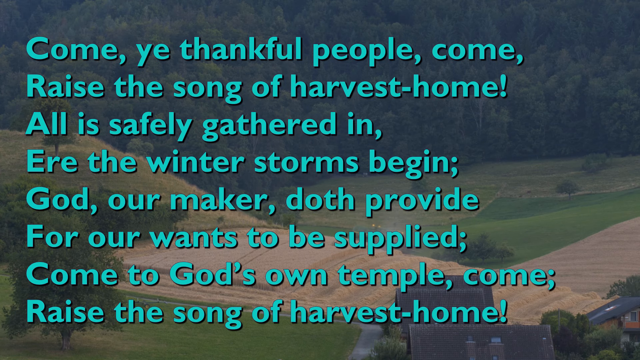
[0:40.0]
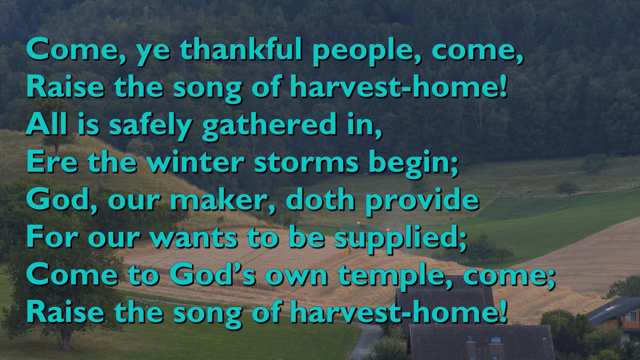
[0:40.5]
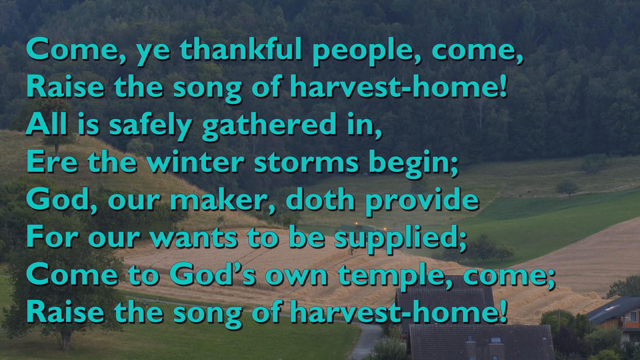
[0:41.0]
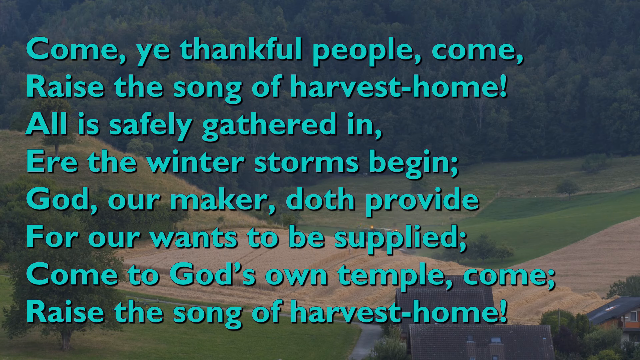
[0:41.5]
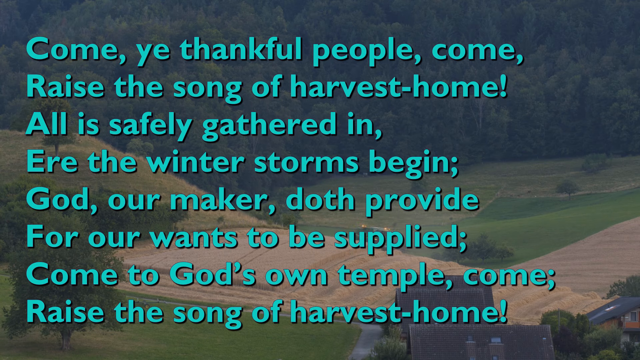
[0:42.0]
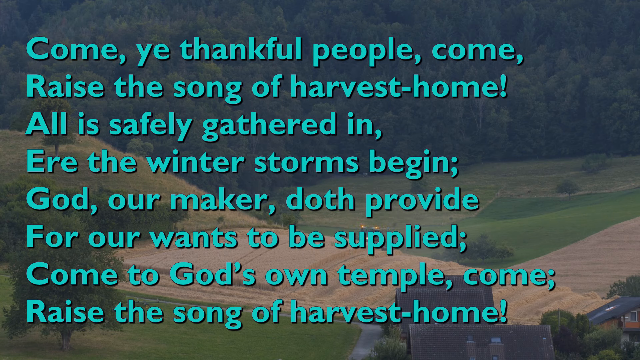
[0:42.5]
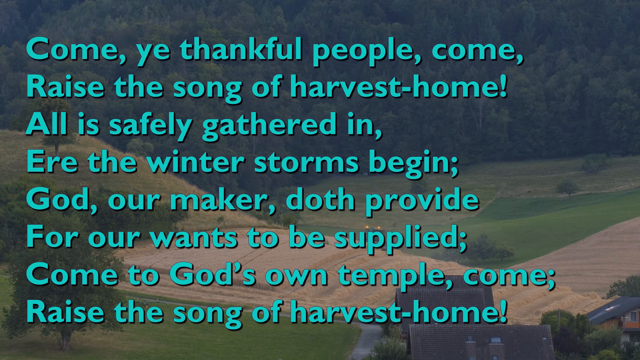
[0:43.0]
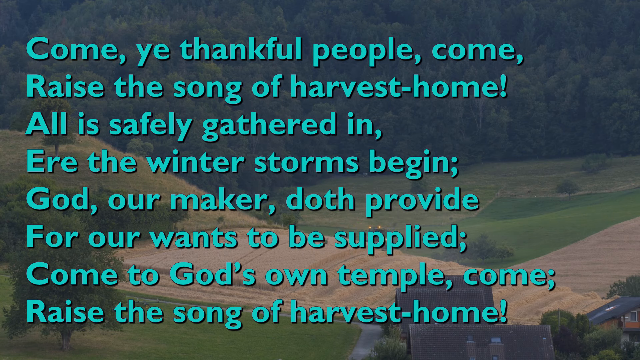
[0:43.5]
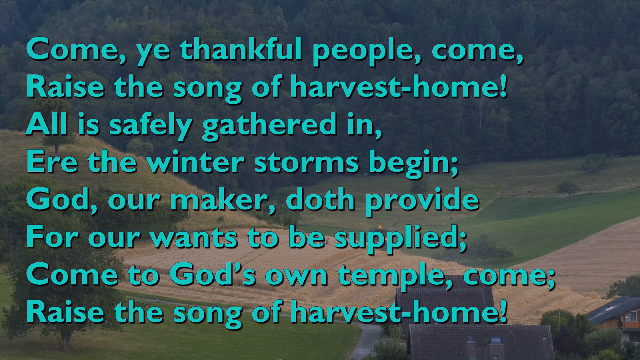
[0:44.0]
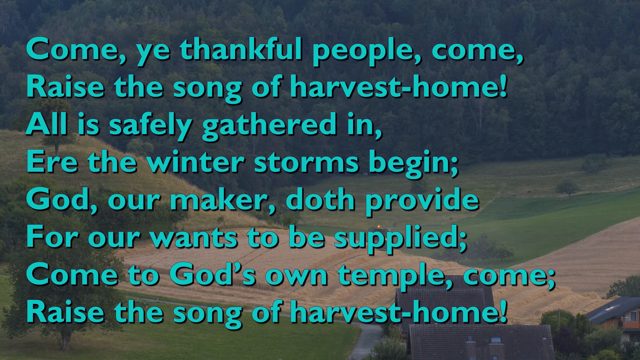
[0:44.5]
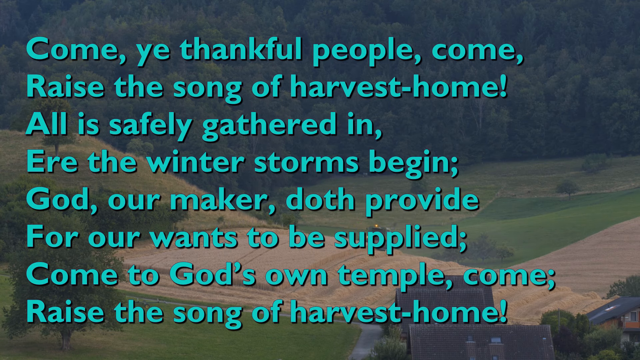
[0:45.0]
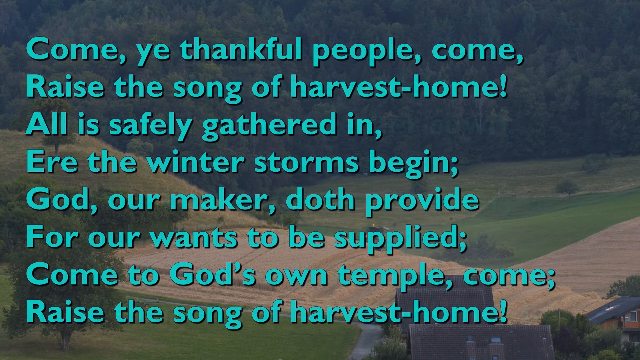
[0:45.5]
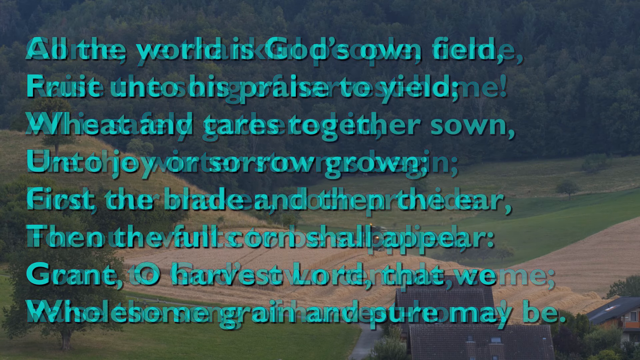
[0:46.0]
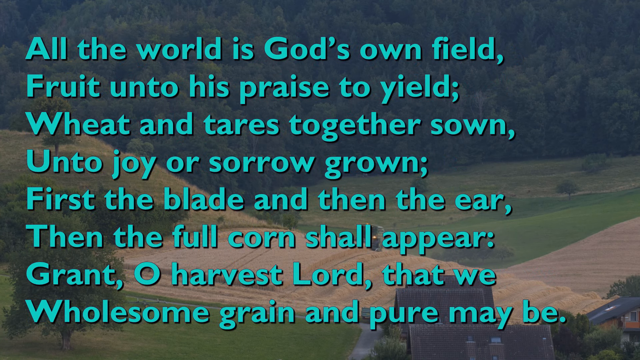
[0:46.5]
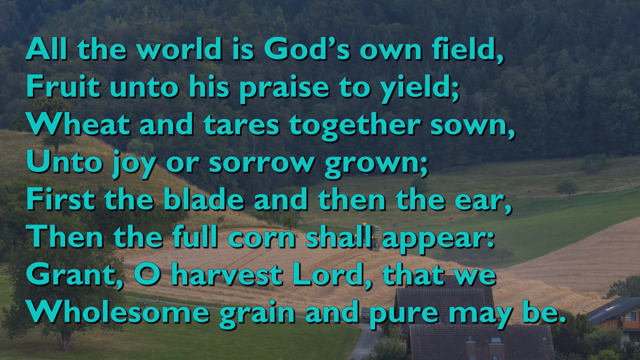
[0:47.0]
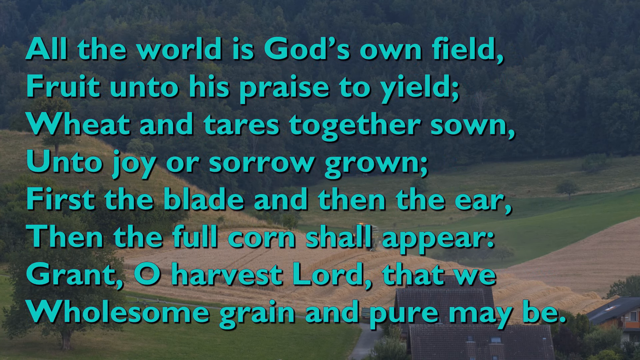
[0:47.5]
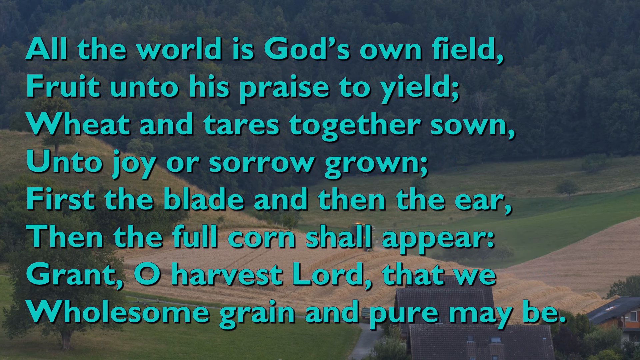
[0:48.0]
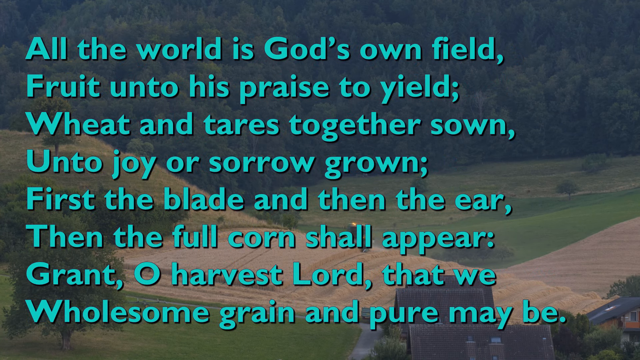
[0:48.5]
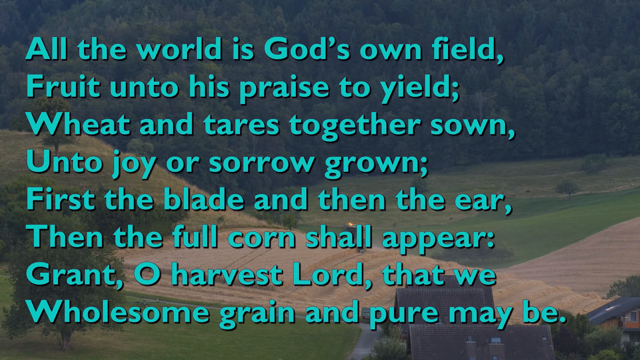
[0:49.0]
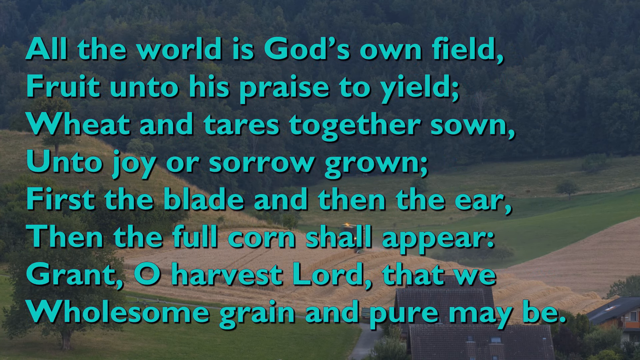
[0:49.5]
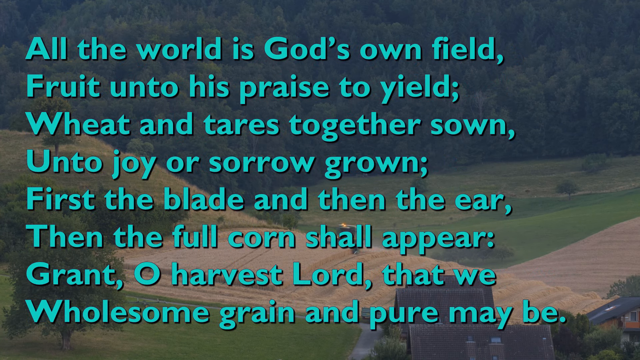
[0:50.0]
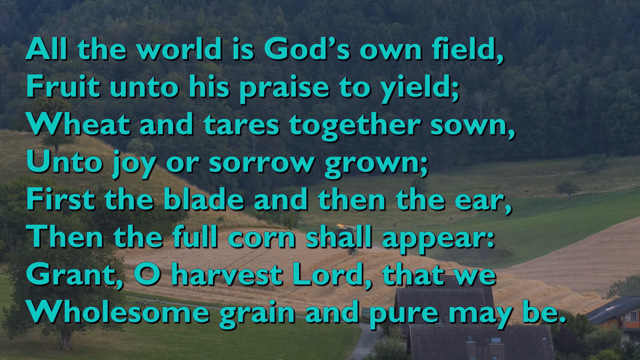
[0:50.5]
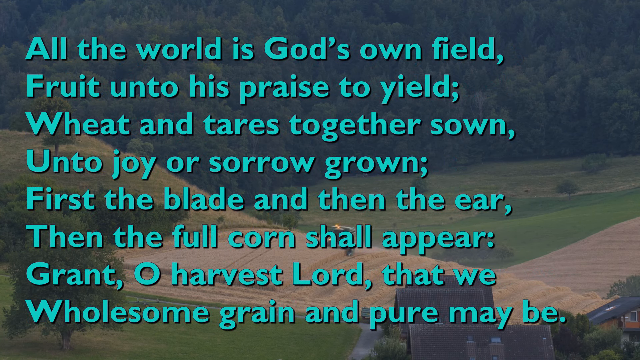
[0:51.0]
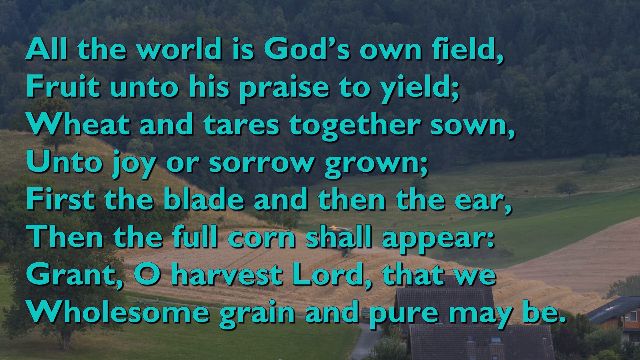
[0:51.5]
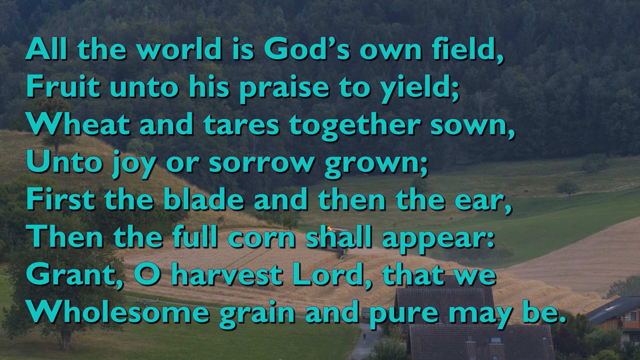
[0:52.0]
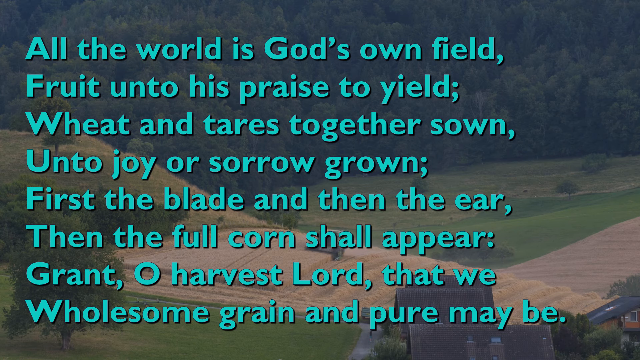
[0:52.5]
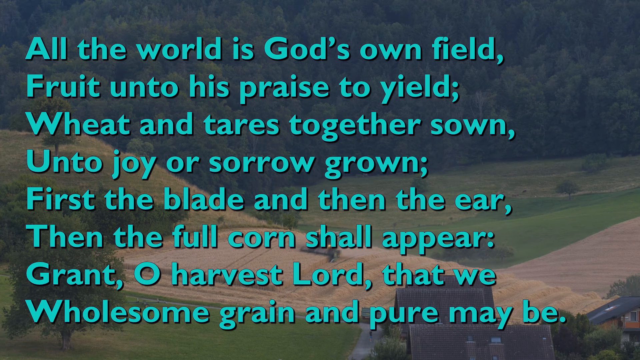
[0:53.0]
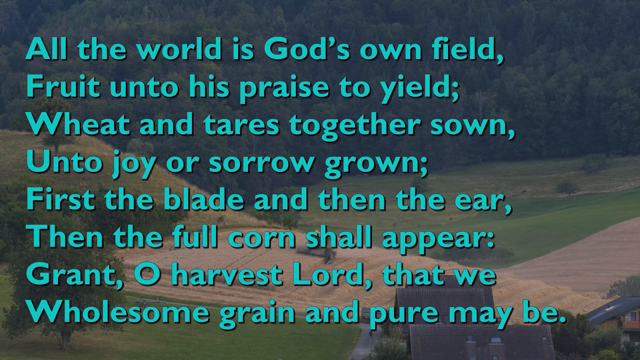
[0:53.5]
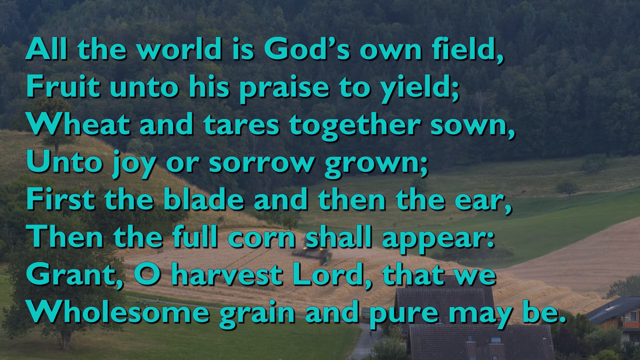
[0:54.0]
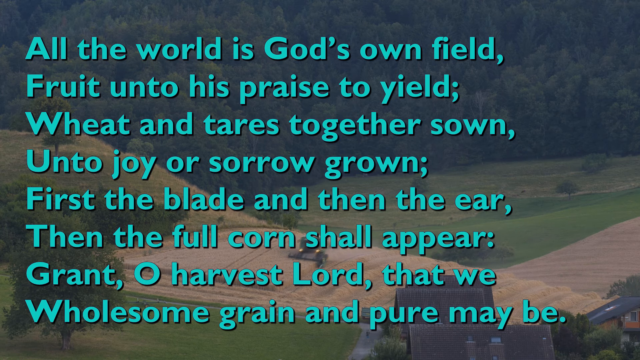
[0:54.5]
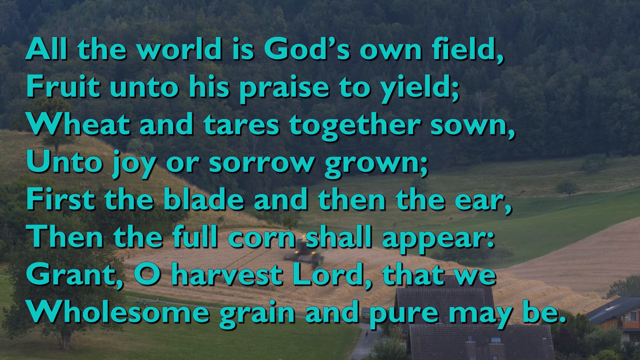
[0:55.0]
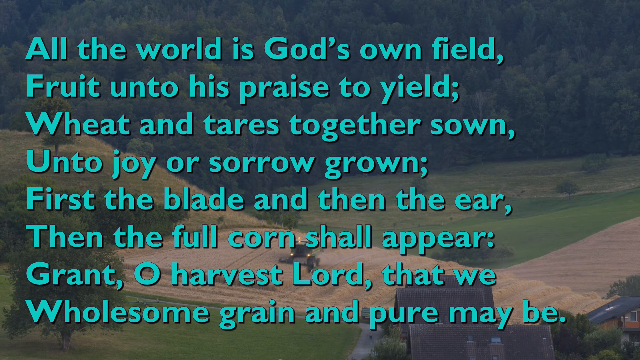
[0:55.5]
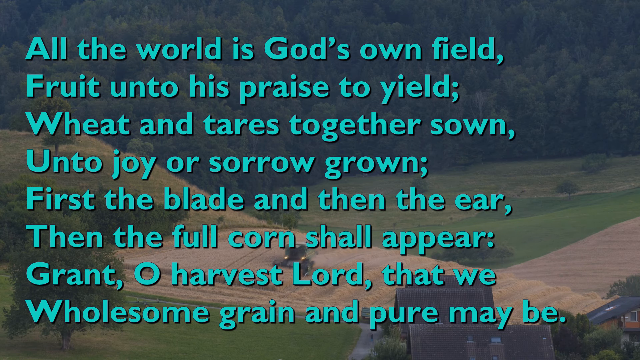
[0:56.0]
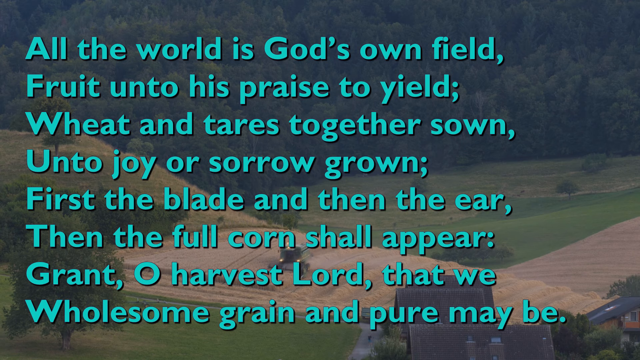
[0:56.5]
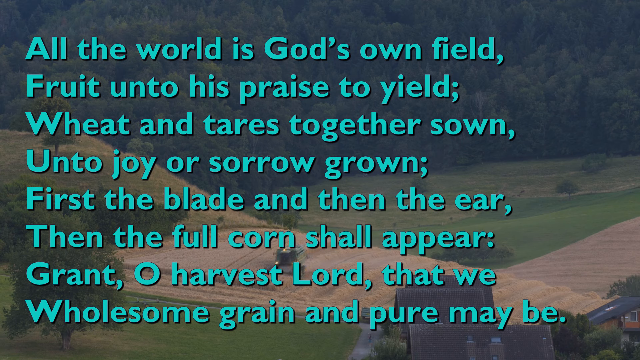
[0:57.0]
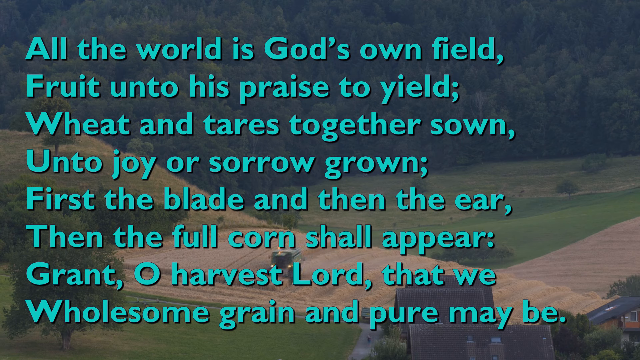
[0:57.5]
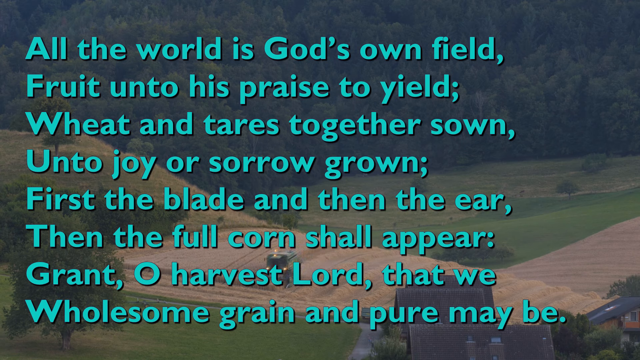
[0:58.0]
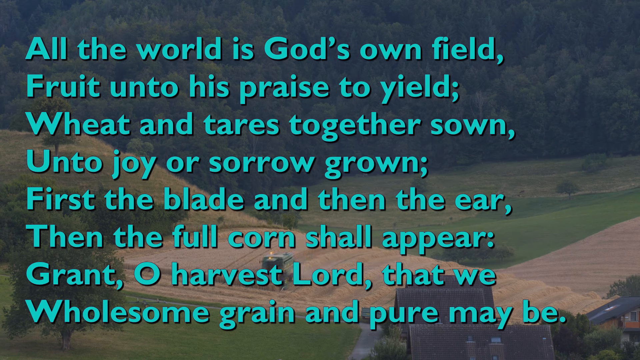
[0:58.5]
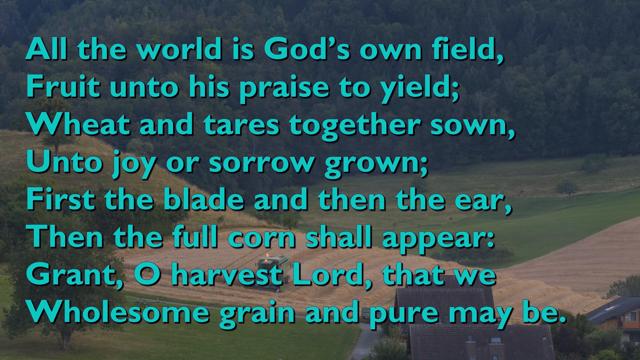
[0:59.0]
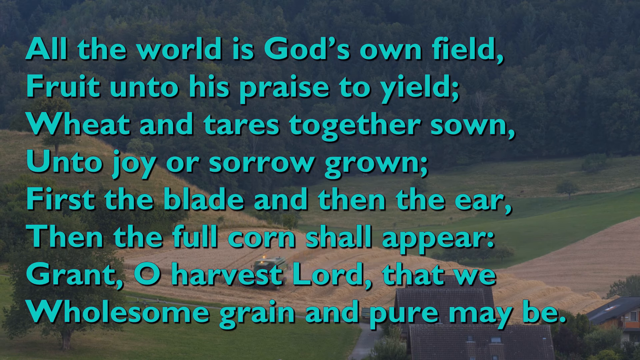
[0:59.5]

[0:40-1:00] A landscape of big pine trees surrounds a grass field. Beside the grass field is a darker green field that looks like turf, very fine and dark green, and beside that is a light brown wheat field that goes up onto a hillside, where a small green machine is cutting different layers of the light tan wheat. A grassy hill to the left side of the wheat field has a small tree on top of it. Across the screen, in turquoise green, the text reads: "Come ye thankful people, come, raise a song of harvest home, all is safely gathered in, God our maker doth provide for our wants to be supplied, come to God's own temple, come, raise a song of harvest home." The machine is visible behind the writing.